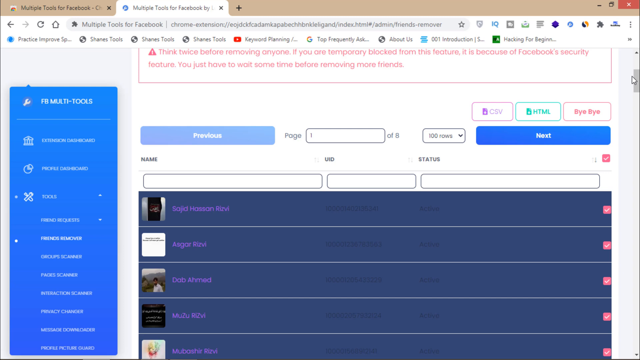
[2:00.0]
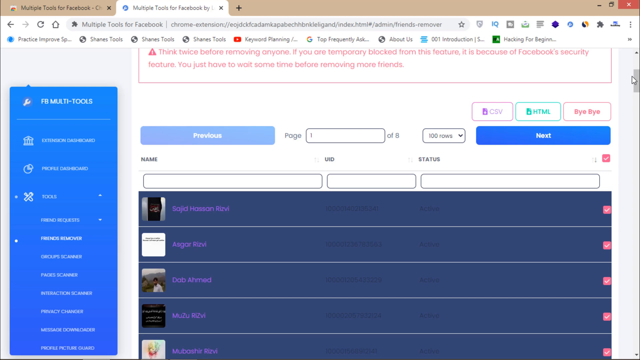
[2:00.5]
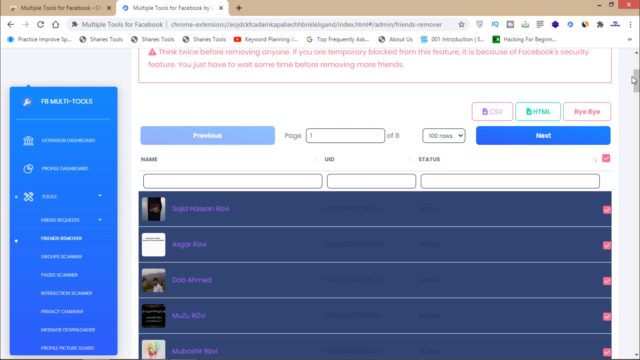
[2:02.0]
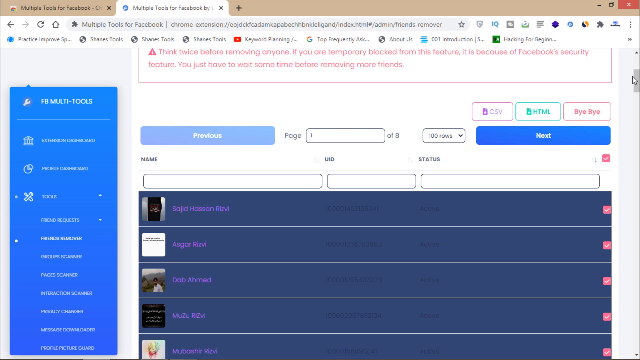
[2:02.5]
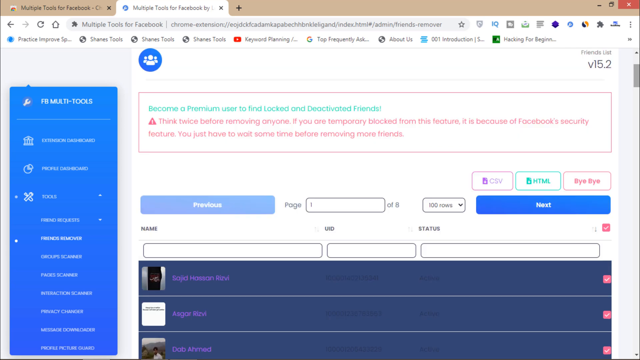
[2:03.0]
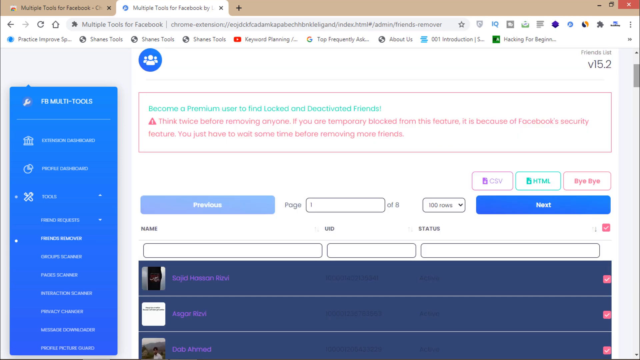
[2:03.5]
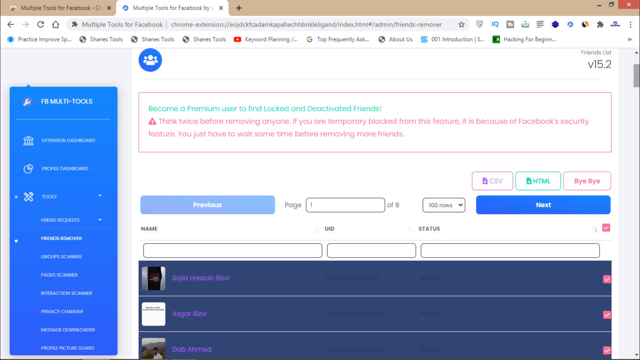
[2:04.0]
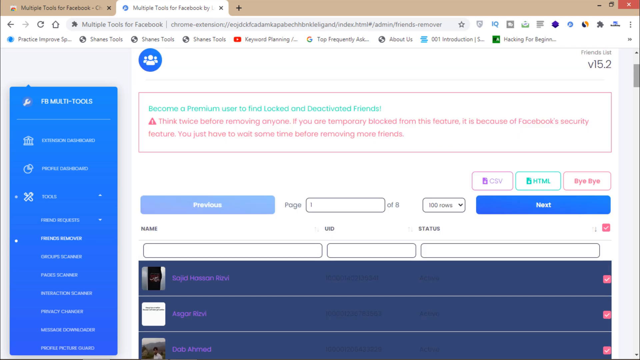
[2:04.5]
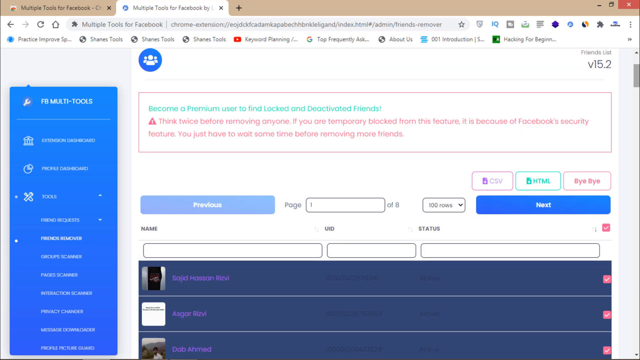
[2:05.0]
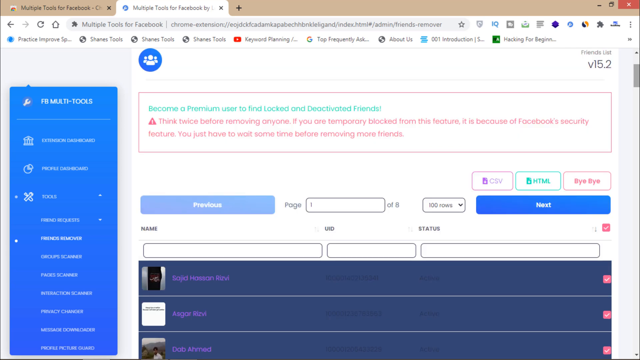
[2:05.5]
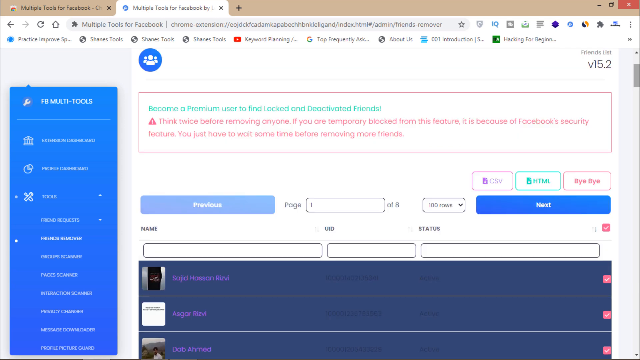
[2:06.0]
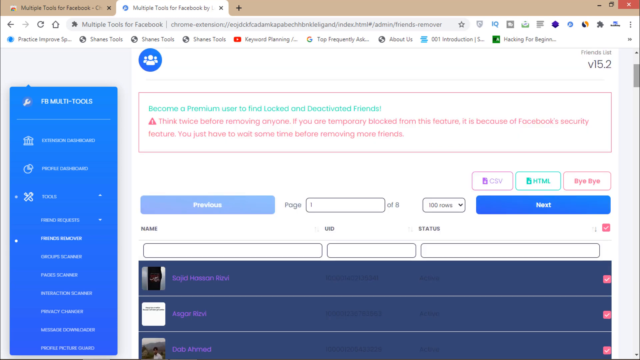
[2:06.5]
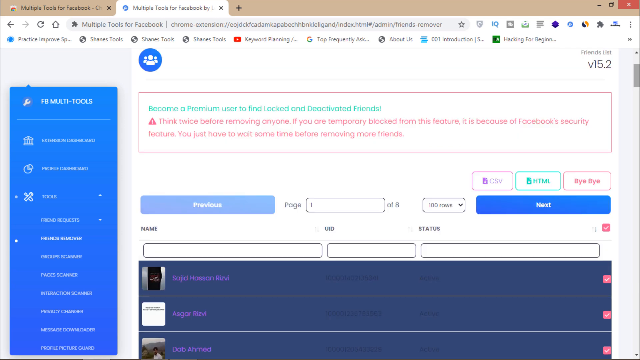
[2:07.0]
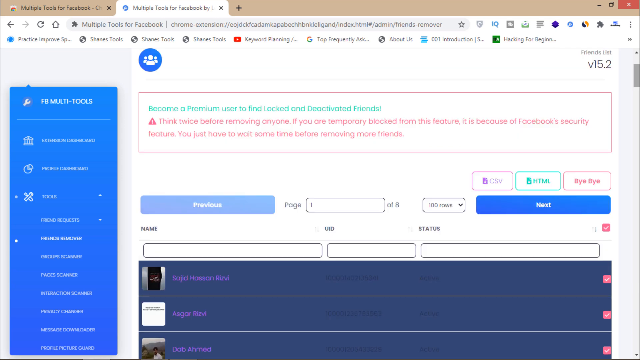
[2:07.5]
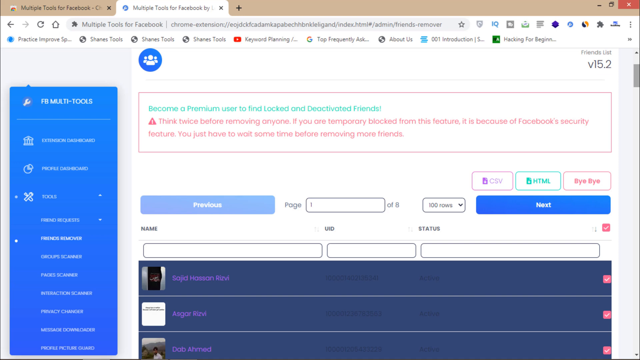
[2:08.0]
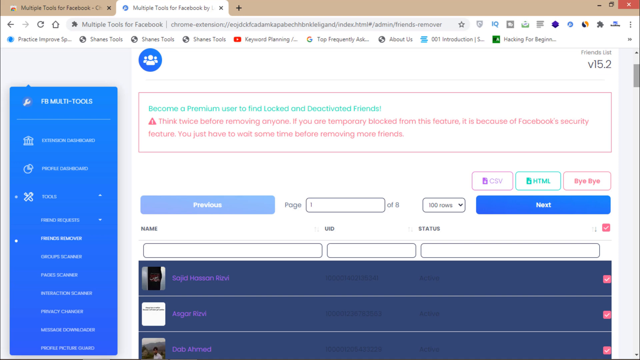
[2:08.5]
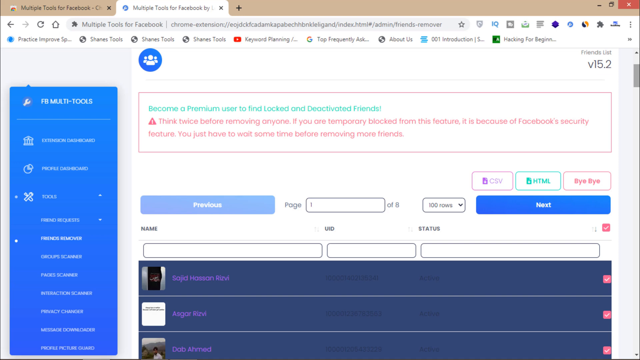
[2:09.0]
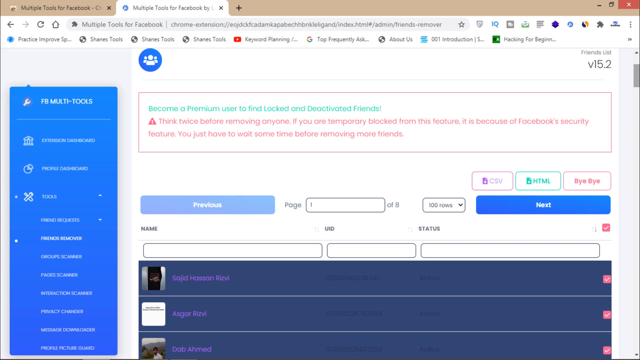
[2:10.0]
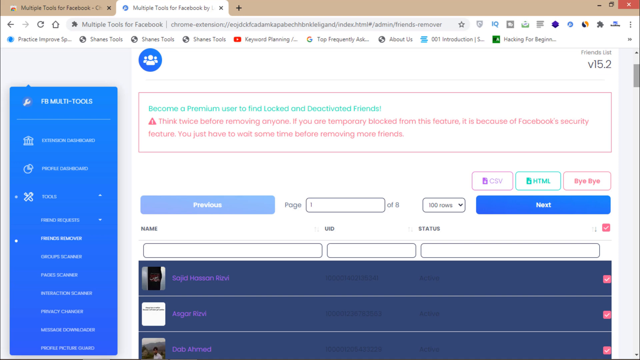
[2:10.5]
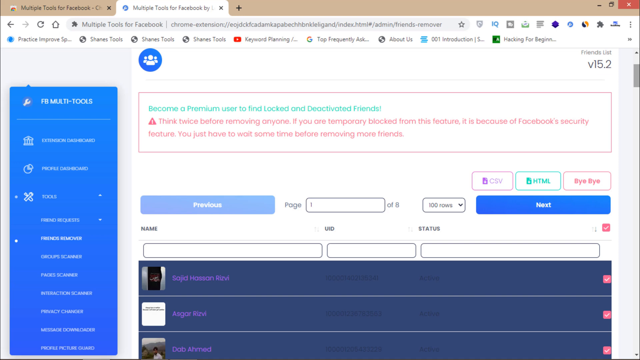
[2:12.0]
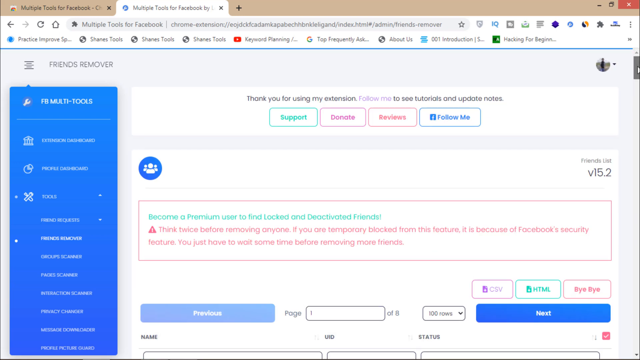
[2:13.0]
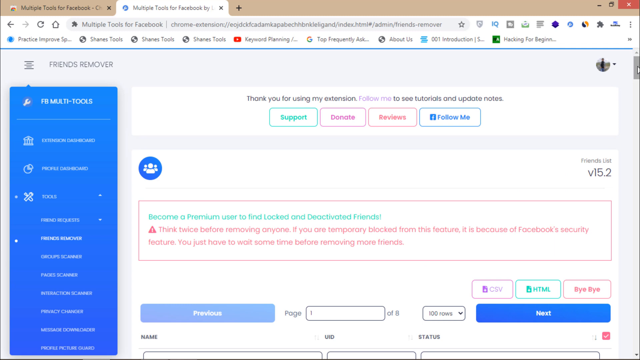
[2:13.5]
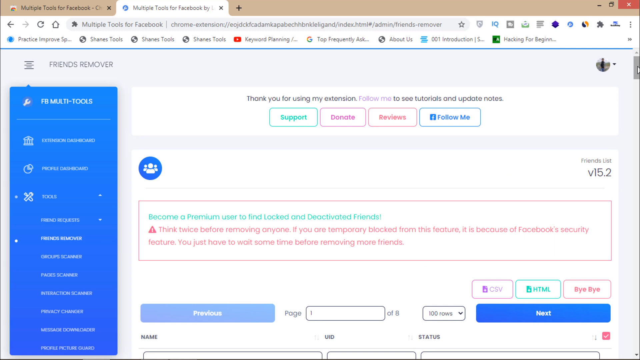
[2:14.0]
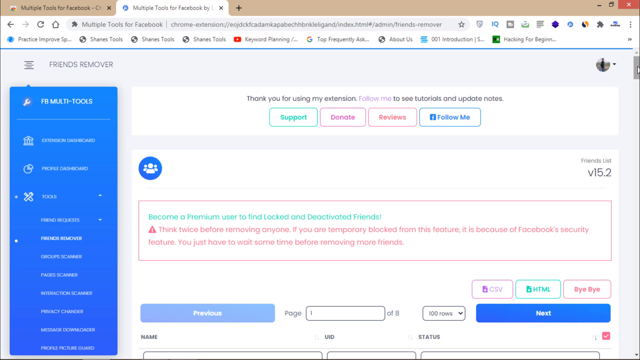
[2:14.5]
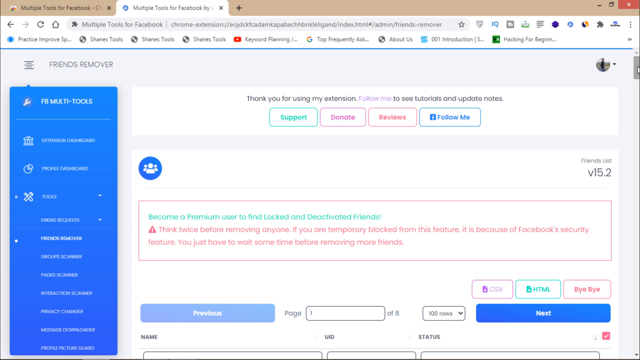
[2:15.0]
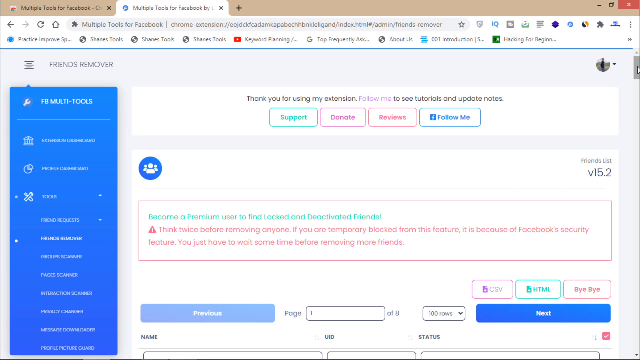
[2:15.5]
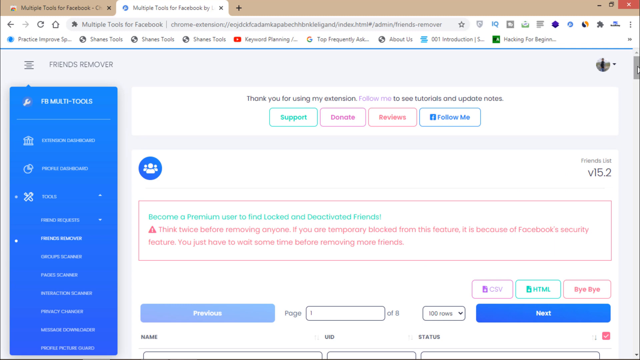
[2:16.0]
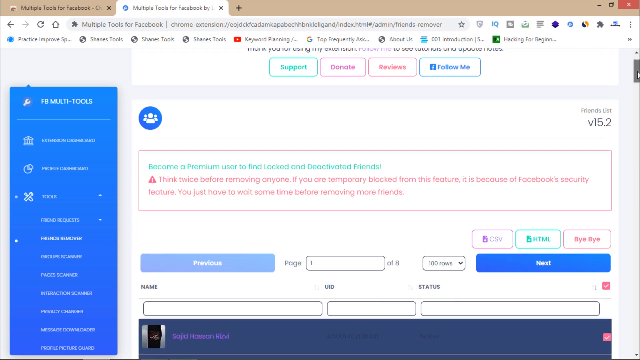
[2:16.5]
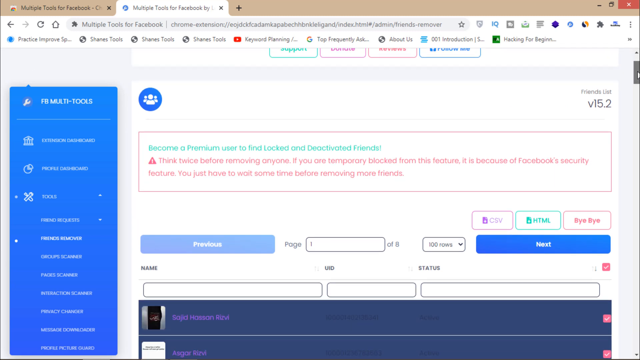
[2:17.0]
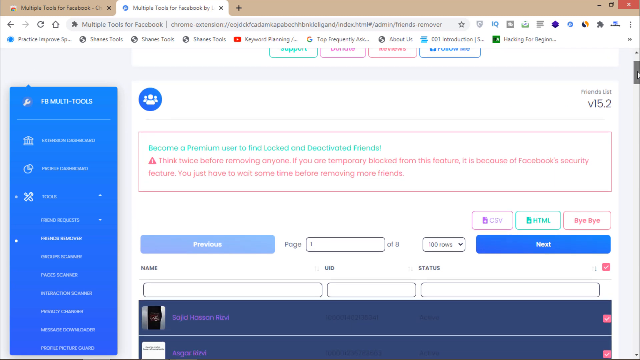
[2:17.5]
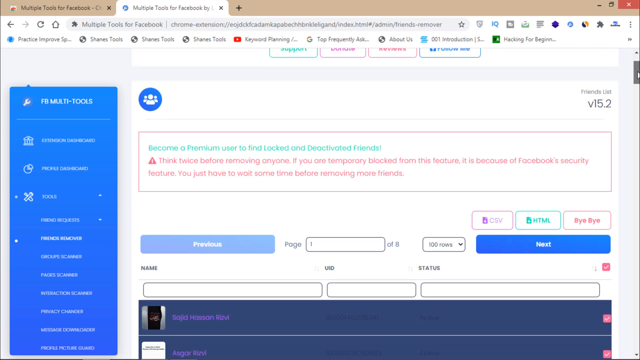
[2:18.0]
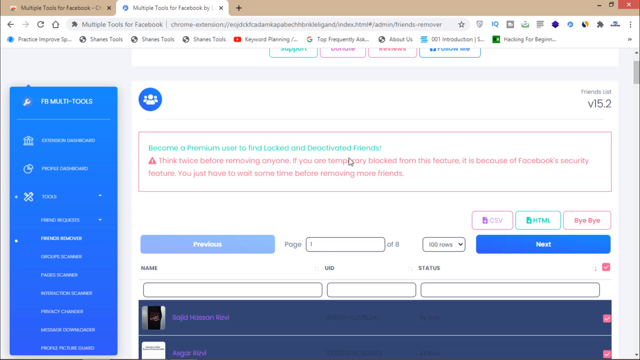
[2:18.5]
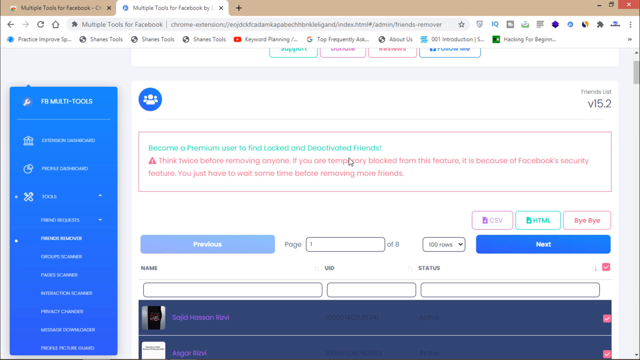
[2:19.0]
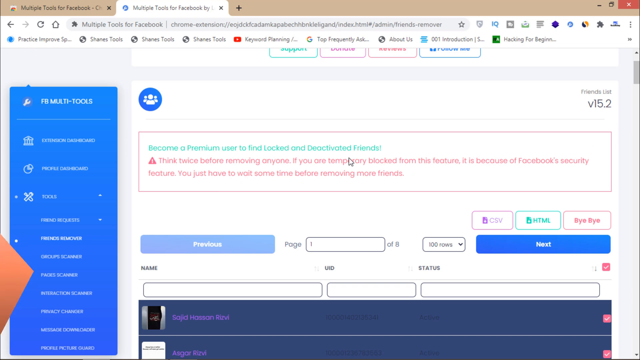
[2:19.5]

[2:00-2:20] The multiple tools for Facebook extension is on screen, with a Facebook multiple tools tab on the side. Text reads "think twice before removing anyone," with the notice about temporary blocks from Facebook's security feature and waiting before removing more friends. About 100 rows of friends are highlighted, as if about to be deleted. The user scrolls up to the top of the page but does not hit the bye-bye button.